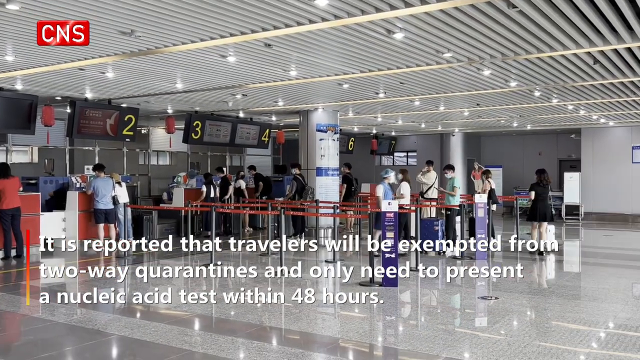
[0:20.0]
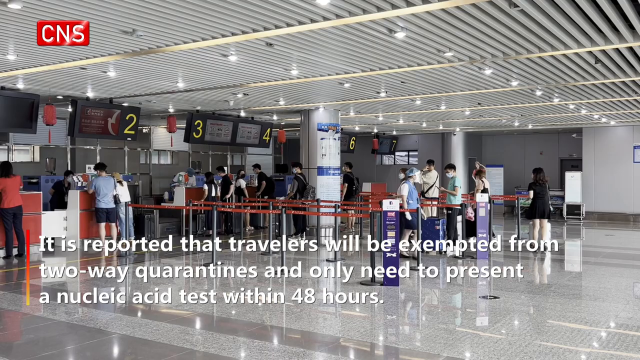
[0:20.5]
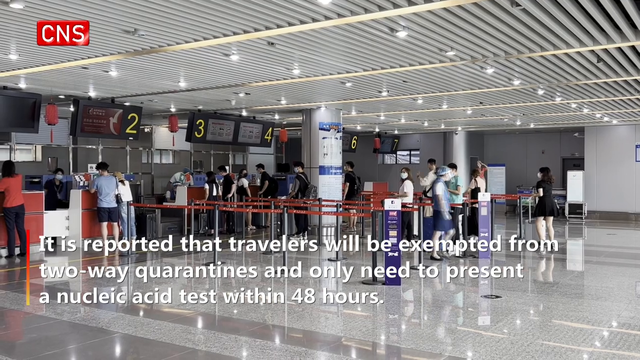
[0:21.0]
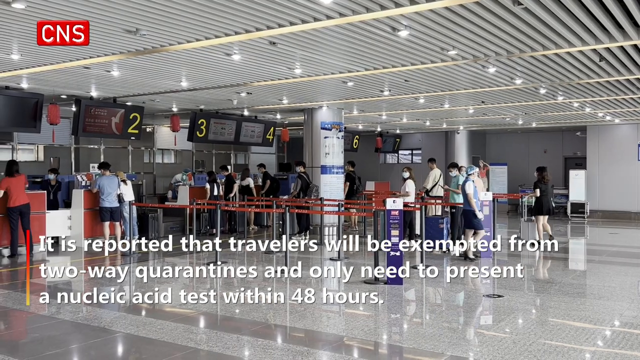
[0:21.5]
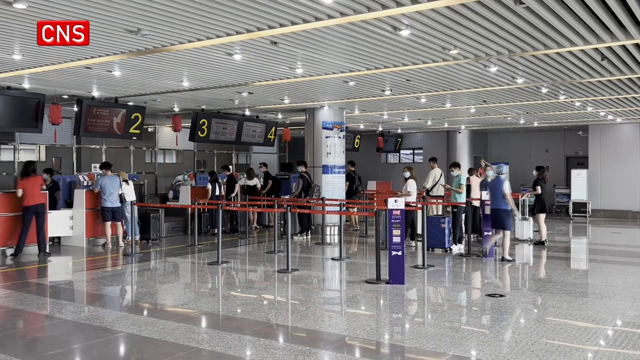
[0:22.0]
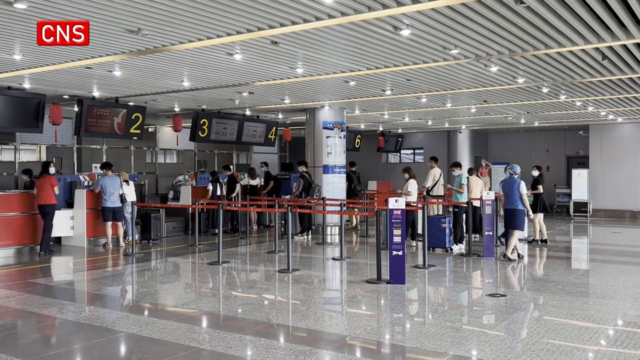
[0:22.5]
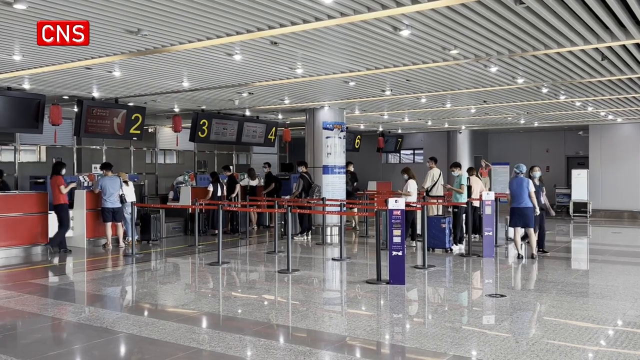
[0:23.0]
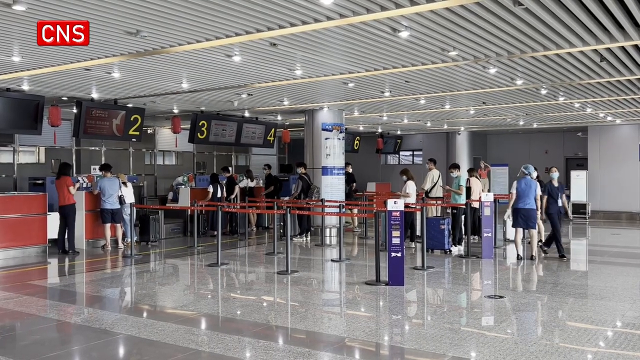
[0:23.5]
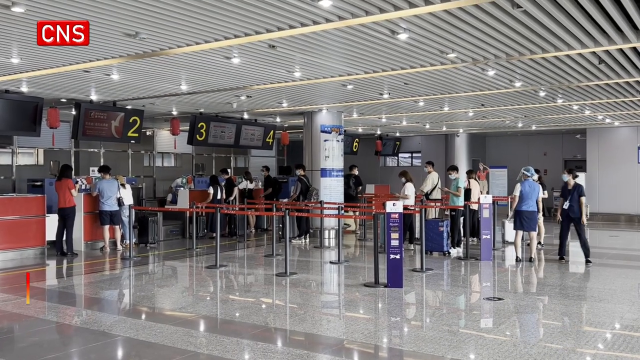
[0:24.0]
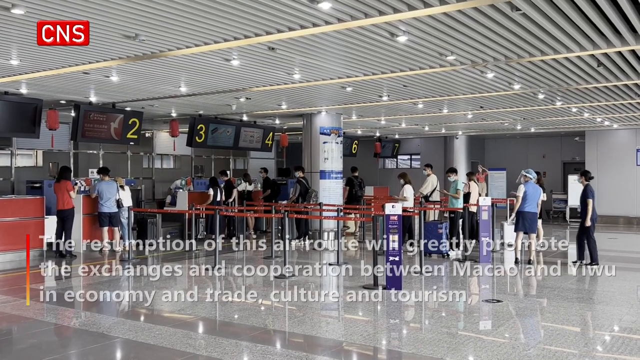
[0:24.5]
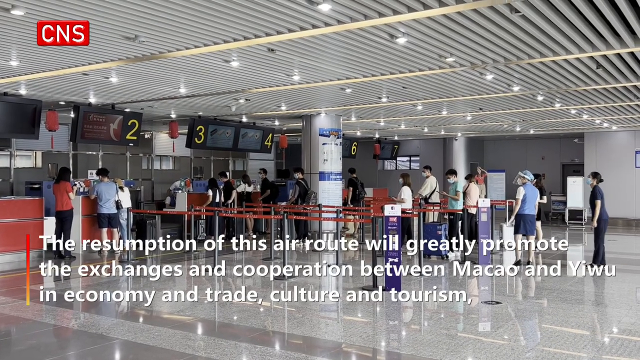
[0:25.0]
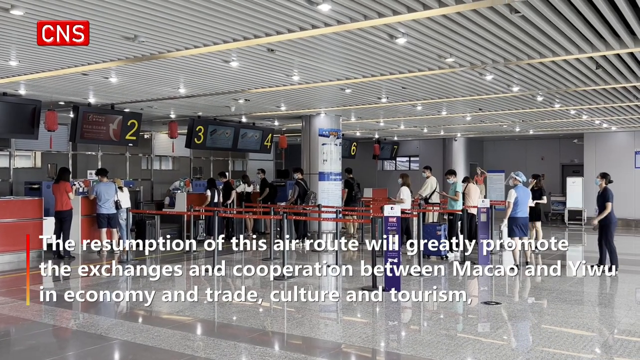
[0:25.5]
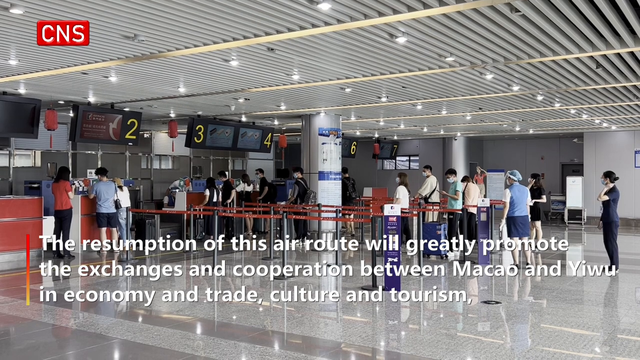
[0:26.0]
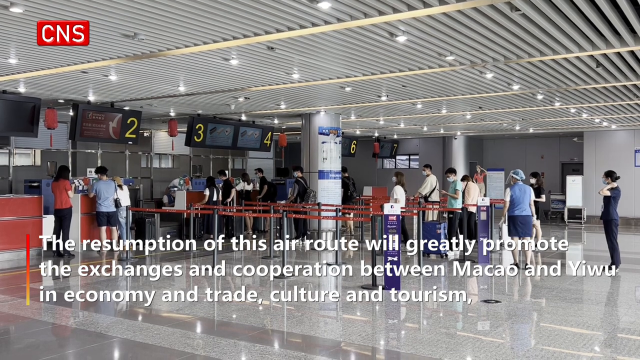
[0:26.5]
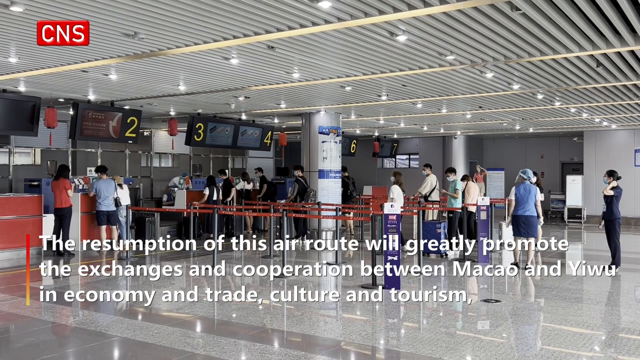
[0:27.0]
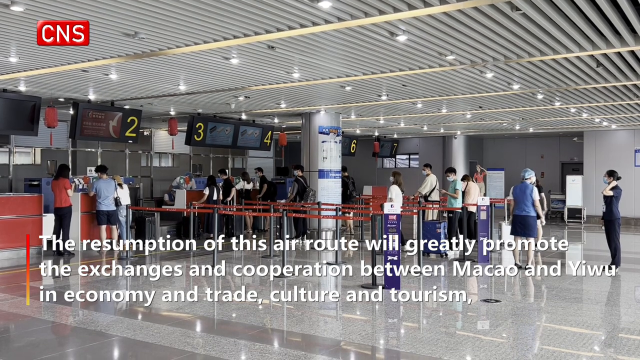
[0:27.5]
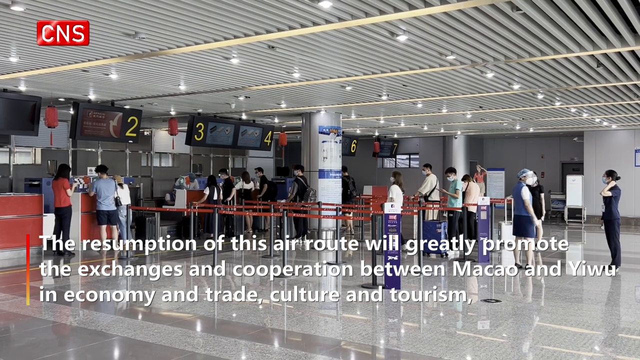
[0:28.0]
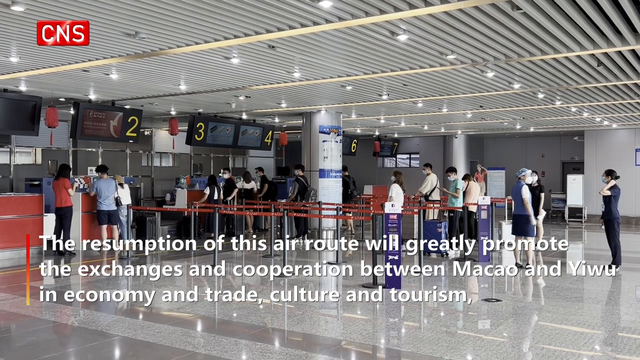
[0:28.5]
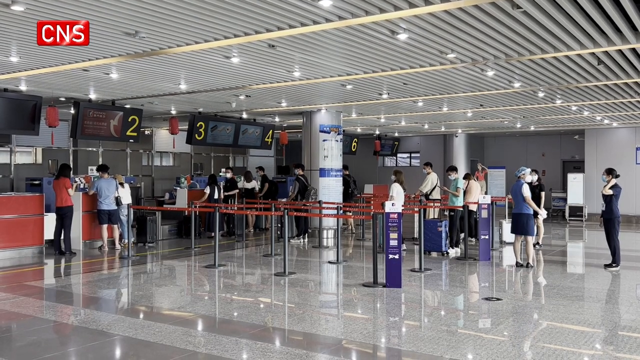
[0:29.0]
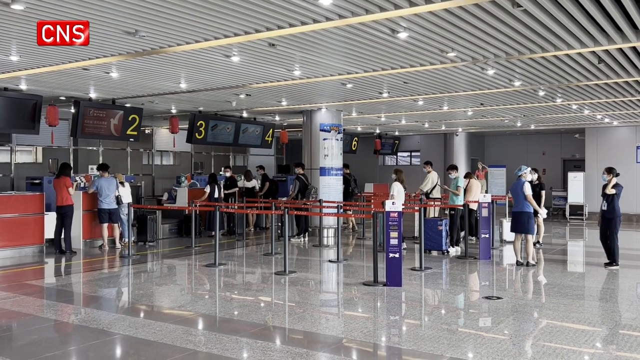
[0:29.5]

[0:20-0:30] The text "it is reported that travelers will be exempted from two-way quarantines and only need to present a nucleic acid test within 48 hours" appears on screen, in what looks like a news report from CNS. The airport in China's Zhejiang province is shown, and text reads "the resumption of this will greatly promote the exchanges and cooperation between Macau and Yiwu in economy and trade, culture and tourism." About 20 people are standing around the check-in areas of the airport. There are lines marked with red ropes, and lanes 2, 3, 4 and 6 are visible. The floors are very shiny, and lots of lights come down from the ceiling. People are wearing shorts and short-sleeved shirts, and a couple of them have bags with them.